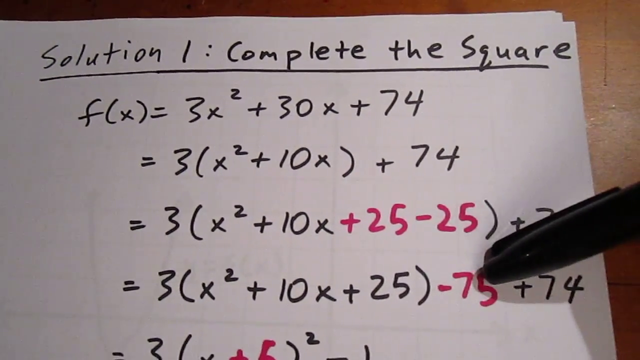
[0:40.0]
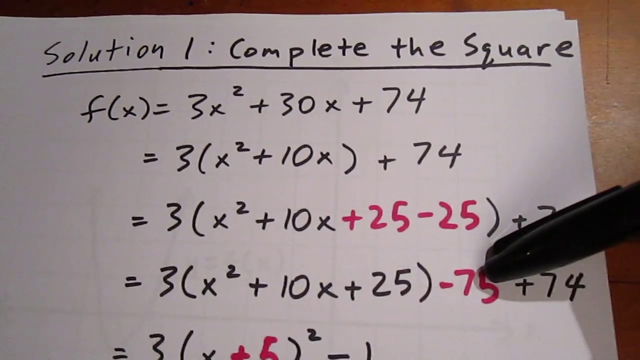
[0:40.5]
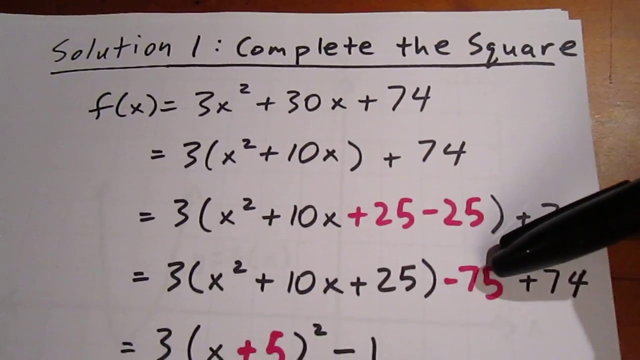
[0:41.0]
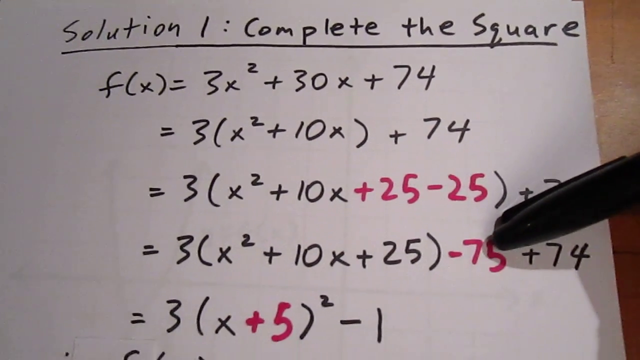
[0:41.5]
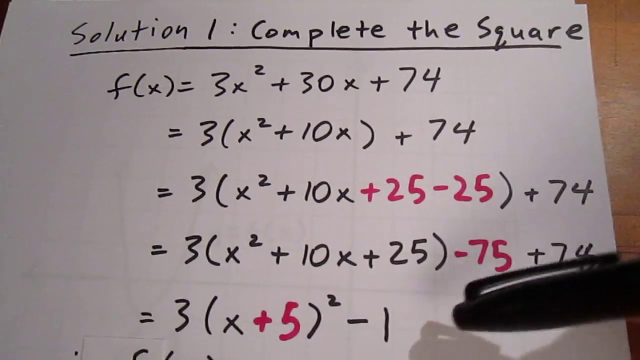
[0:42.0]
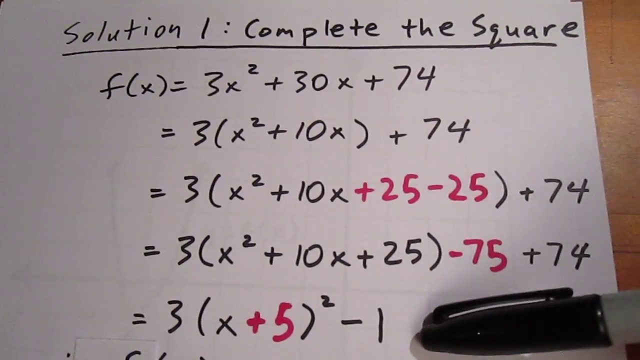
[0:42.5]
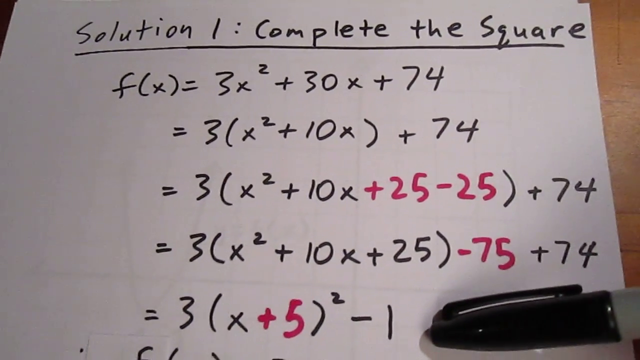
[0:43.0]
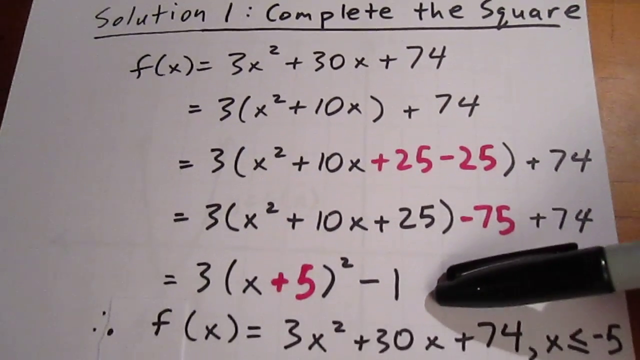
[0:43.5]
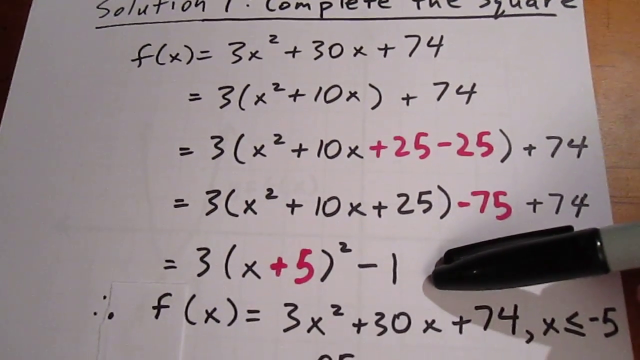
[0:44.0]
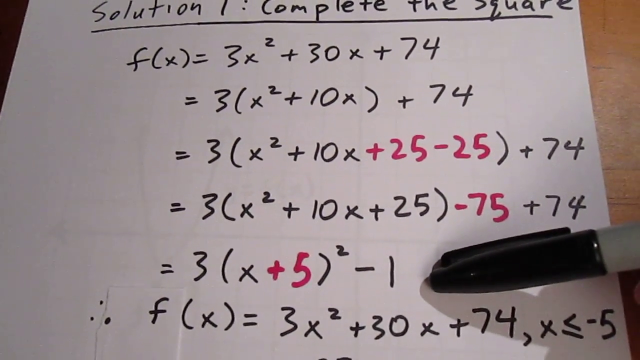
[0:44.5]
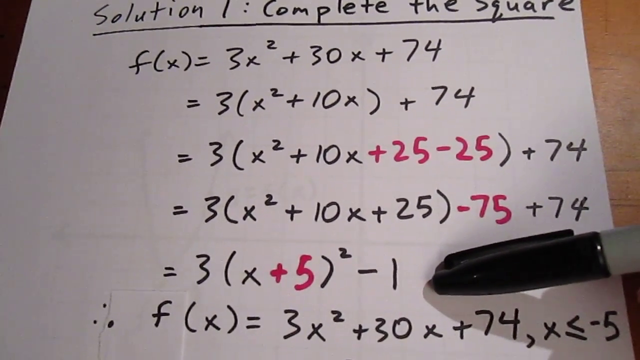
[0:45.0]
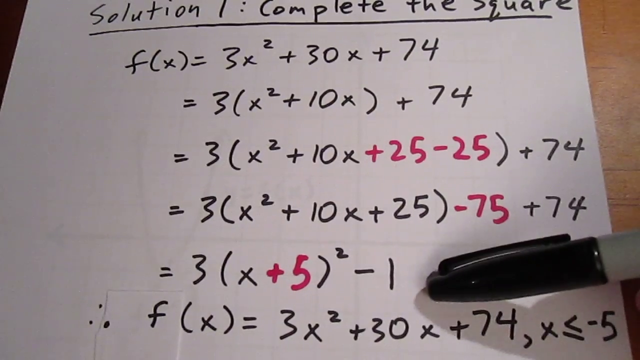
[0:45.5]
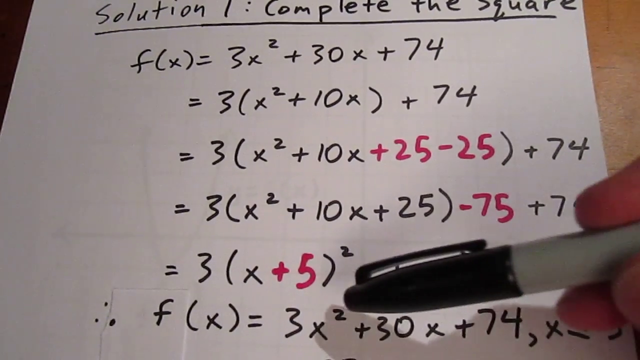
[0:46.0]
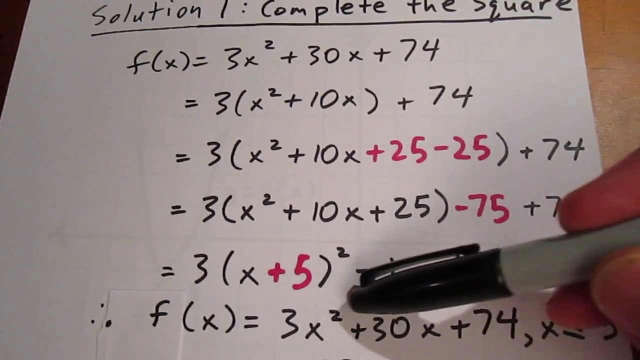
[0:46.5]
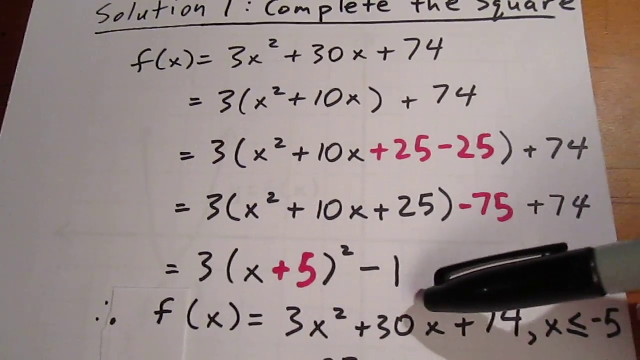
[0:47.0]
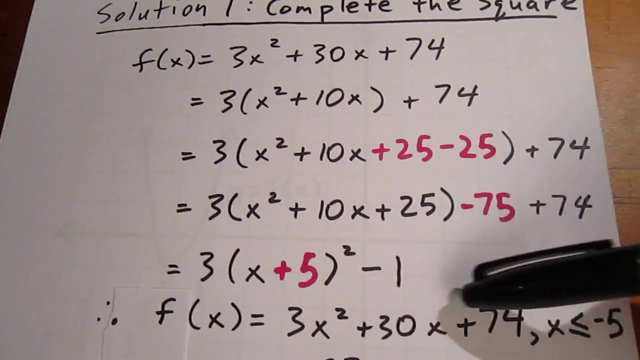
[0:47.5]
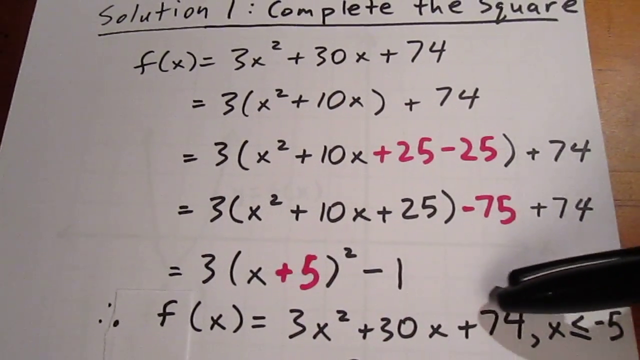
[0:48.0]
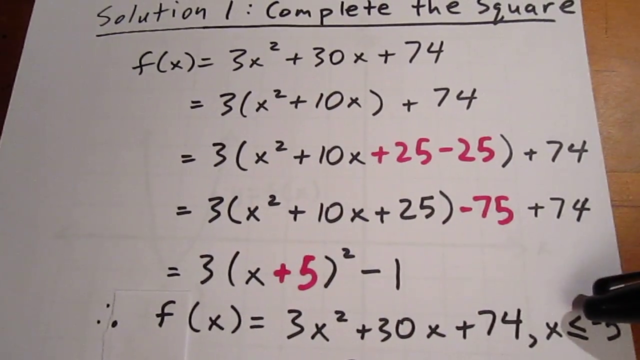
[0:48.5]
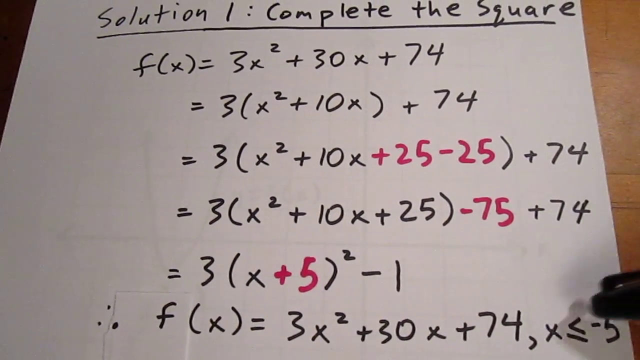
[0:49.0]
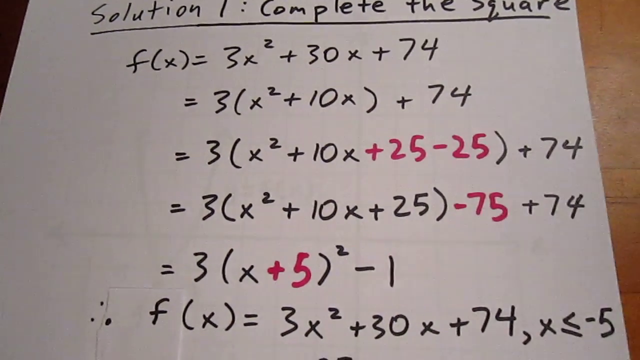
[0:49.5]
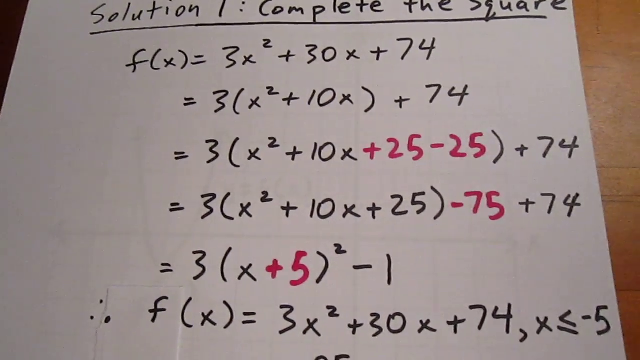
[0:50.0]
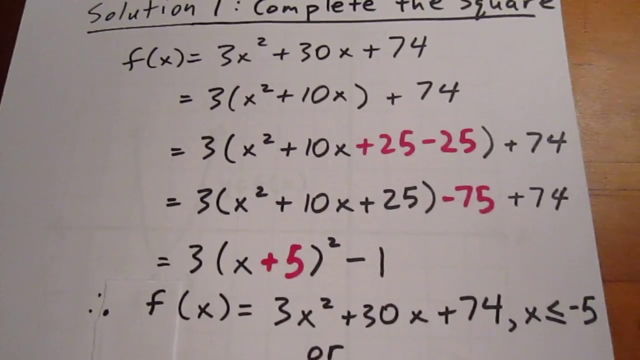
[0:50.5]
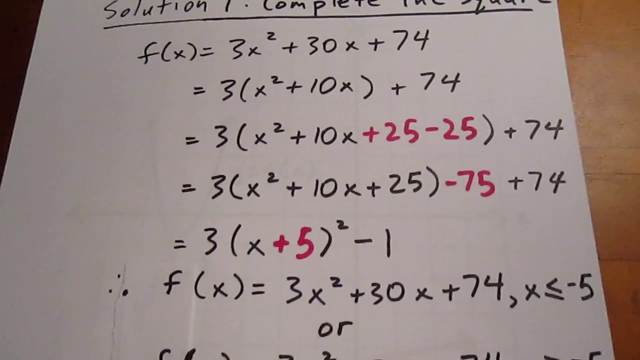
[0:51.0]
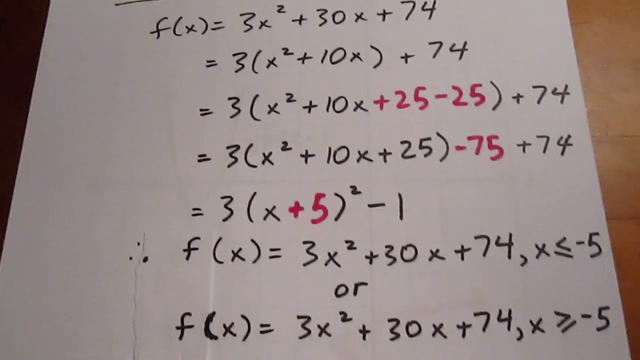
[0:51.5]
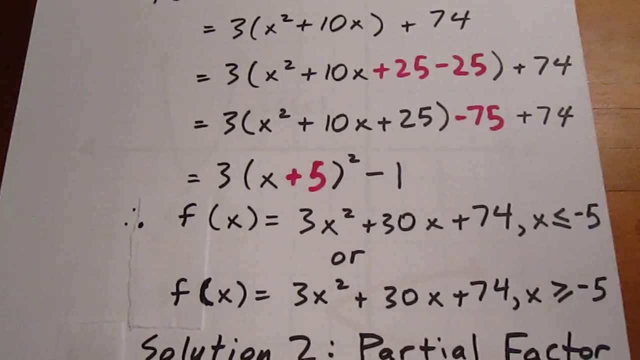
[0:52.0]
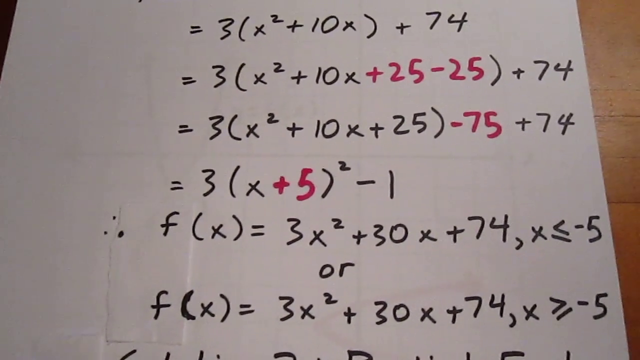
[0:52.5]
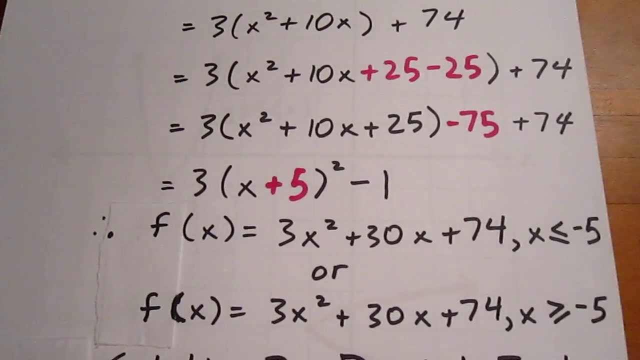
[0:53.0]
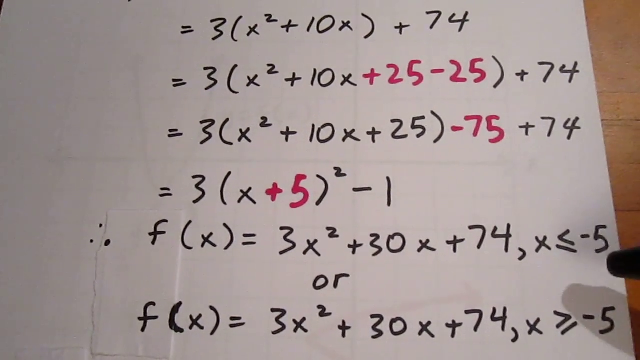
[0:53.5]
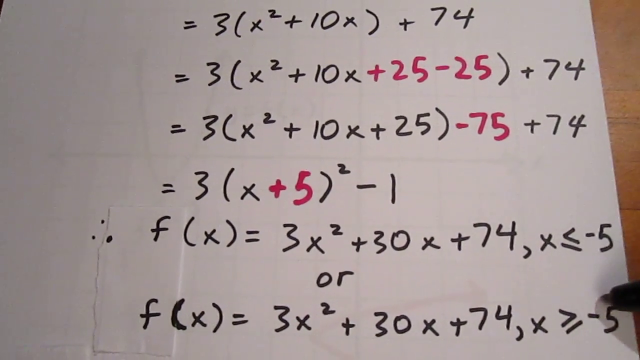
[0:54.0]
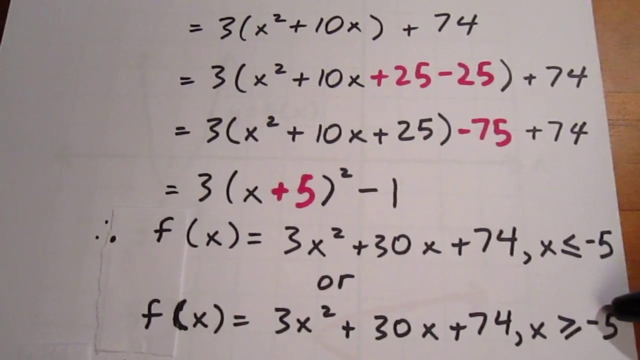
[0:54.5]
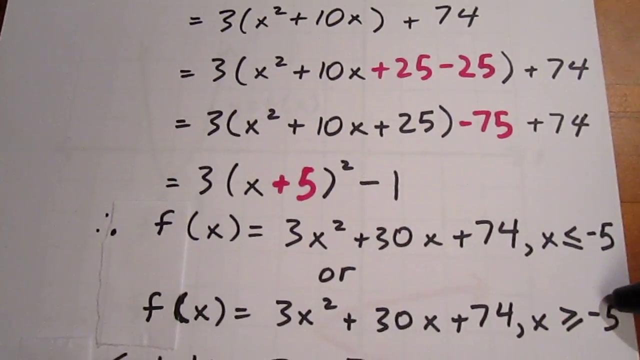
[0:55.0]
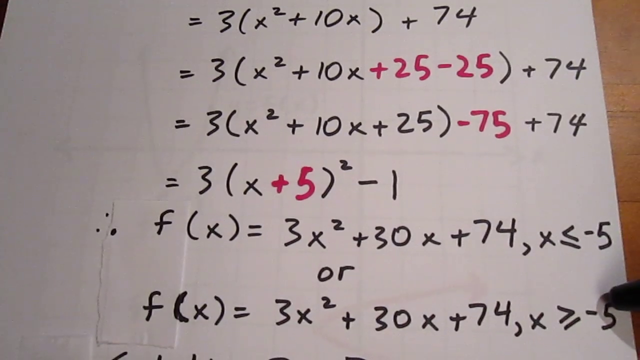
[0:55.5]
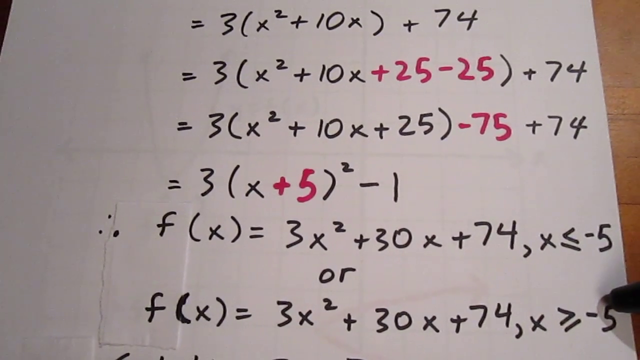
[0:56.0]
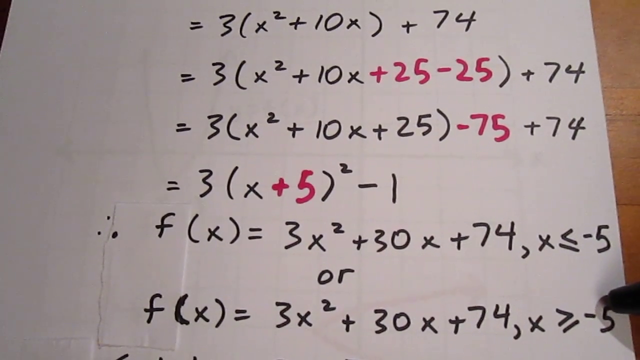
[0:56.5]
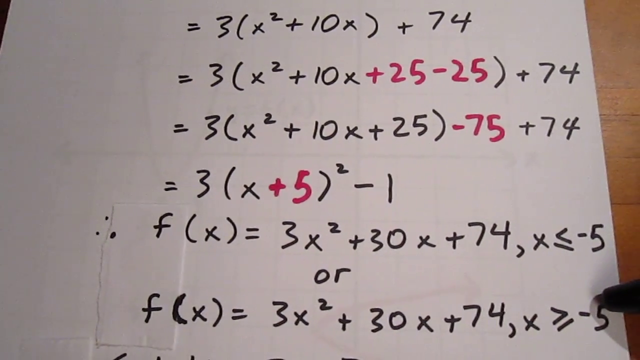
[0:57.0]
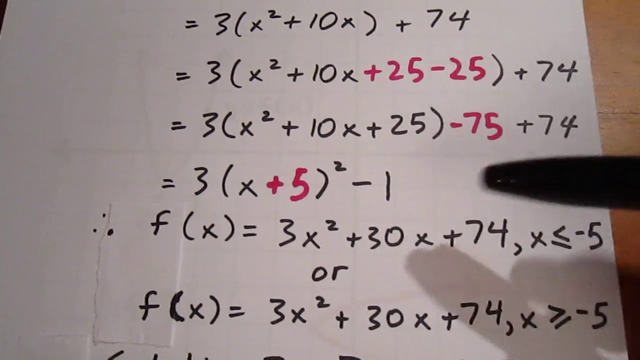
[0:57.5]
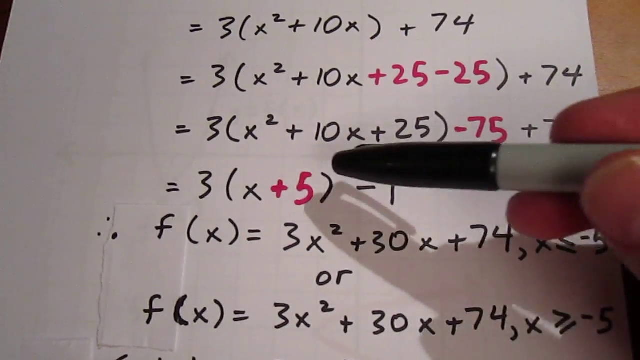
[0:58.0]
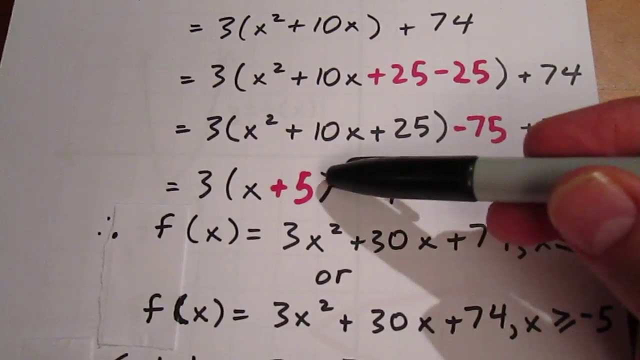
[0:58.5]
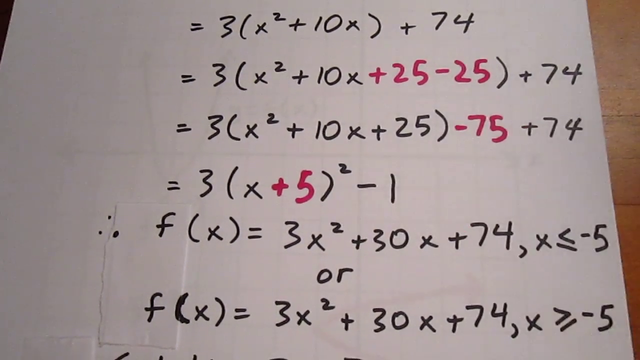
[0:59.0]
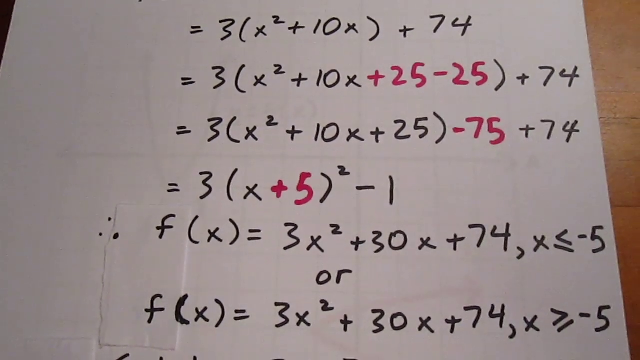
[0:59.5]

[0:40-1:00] The fifth line of the solution reads f(x) = 3(x + 5)² − 1, with the +5 in red. At the bottom, the page reads f(x) = 3x² + 30x + 74 where x ≤ −5, or f(x) = 3x² + 30x + 74 where x ≥ −5, apparently the solution reached by completing the square. Finally, the capped sharpie points at the line f(x) = 3(x + 5)² − 1.